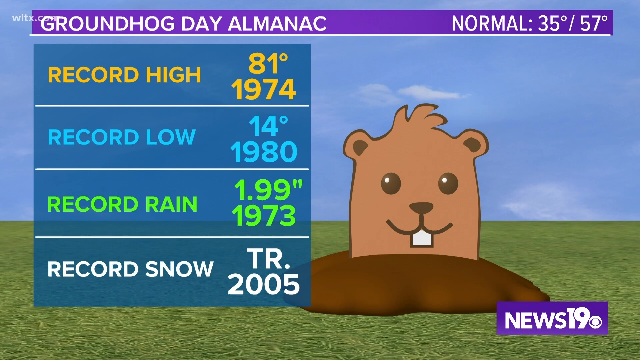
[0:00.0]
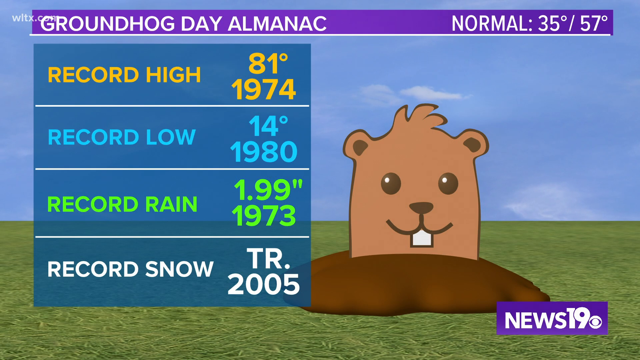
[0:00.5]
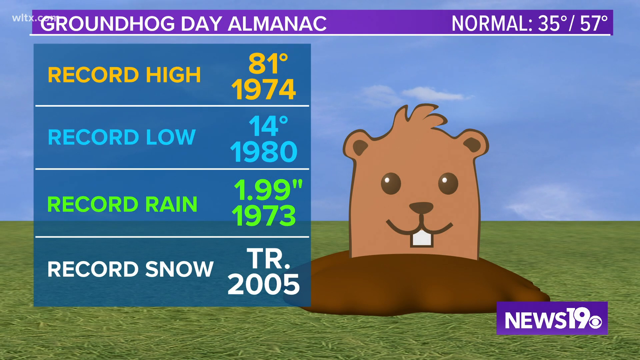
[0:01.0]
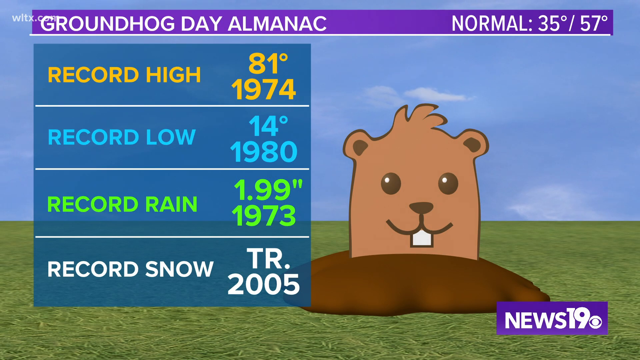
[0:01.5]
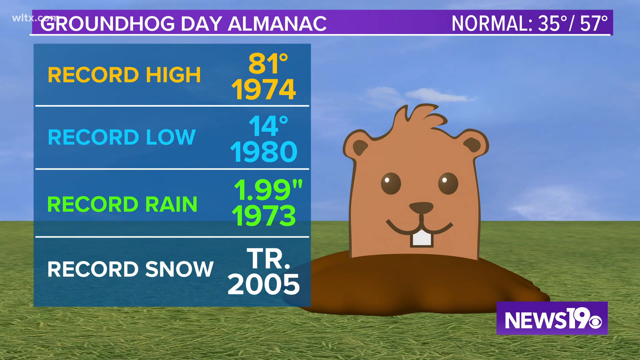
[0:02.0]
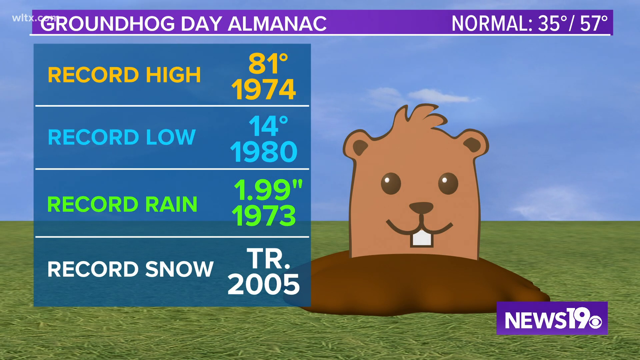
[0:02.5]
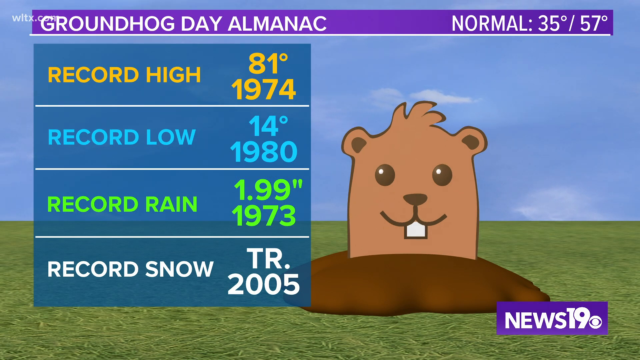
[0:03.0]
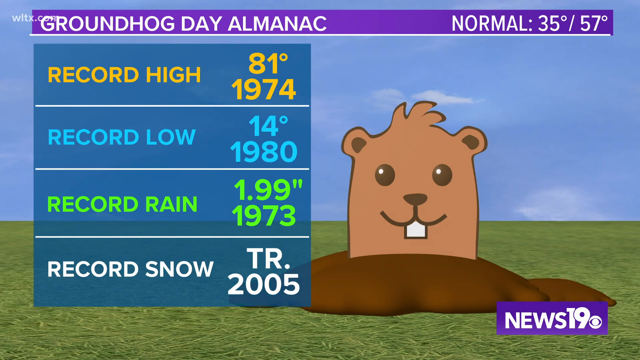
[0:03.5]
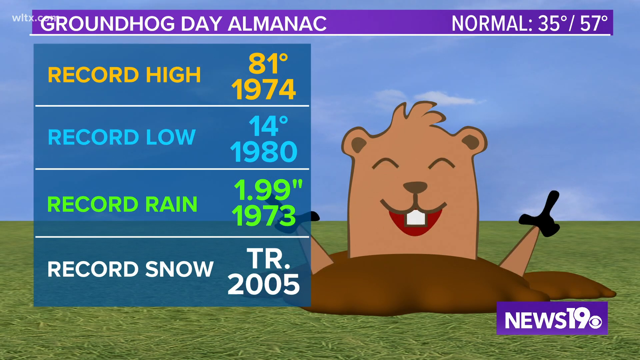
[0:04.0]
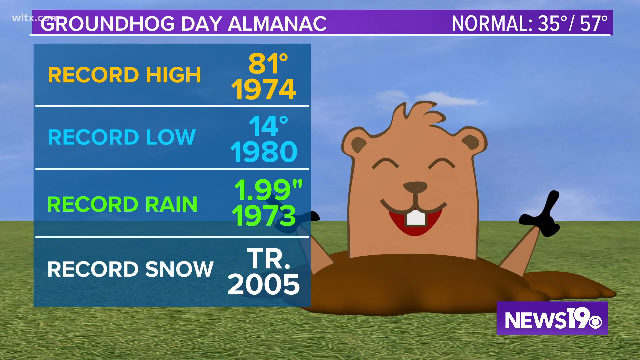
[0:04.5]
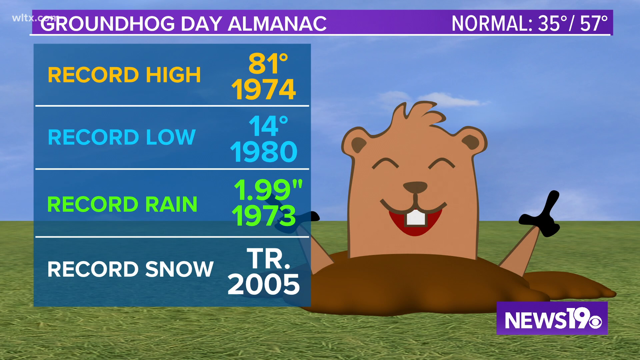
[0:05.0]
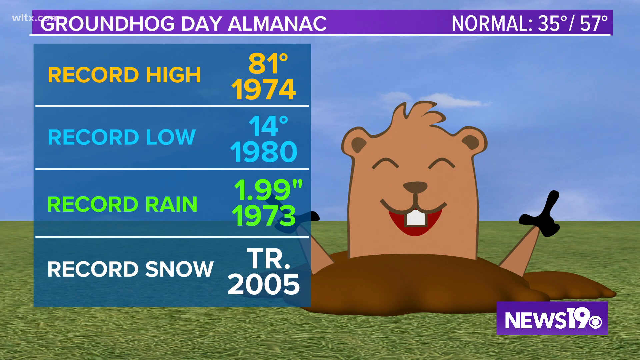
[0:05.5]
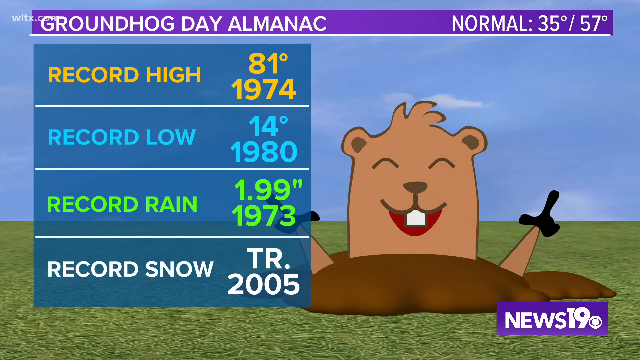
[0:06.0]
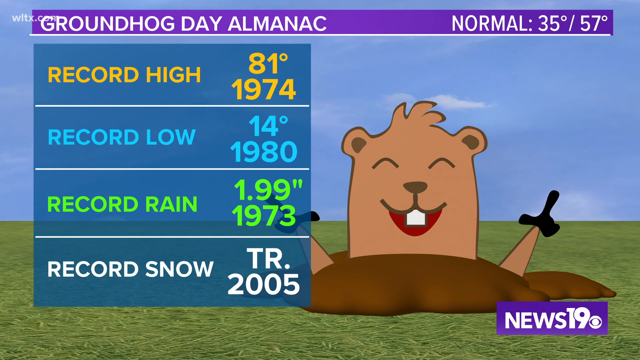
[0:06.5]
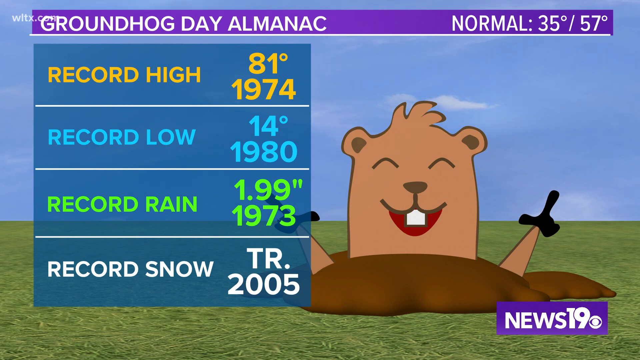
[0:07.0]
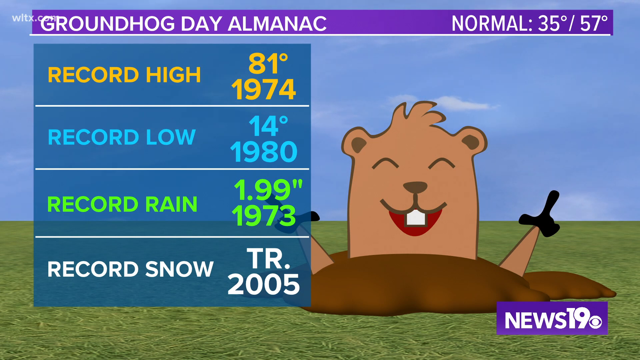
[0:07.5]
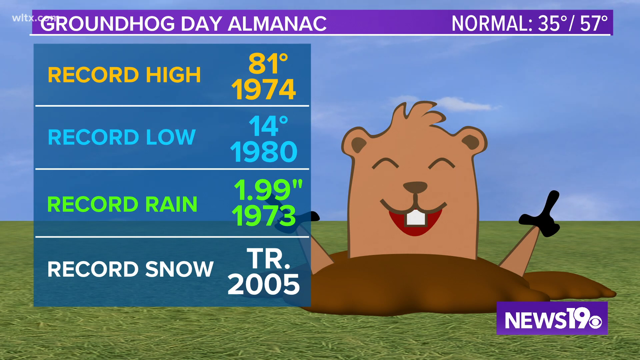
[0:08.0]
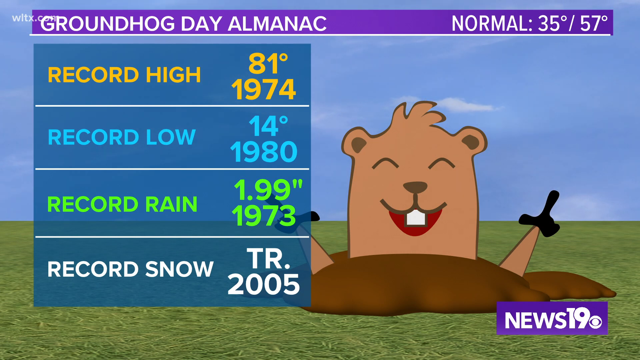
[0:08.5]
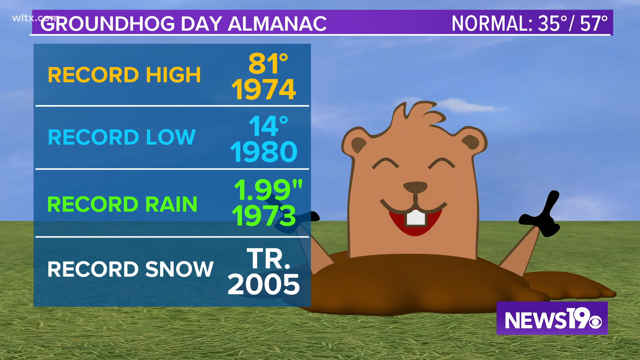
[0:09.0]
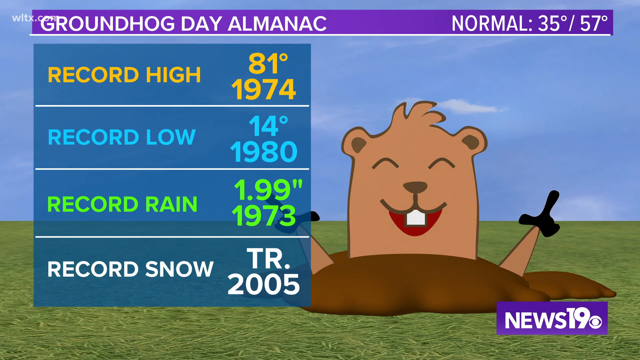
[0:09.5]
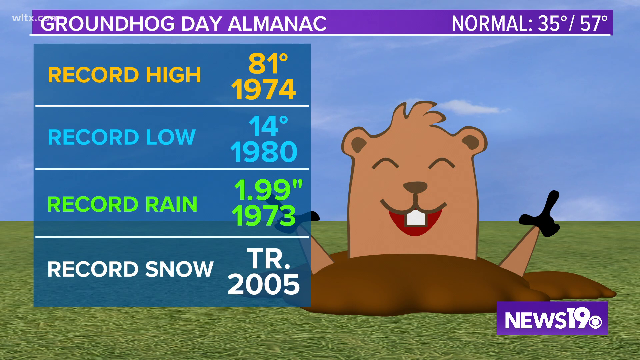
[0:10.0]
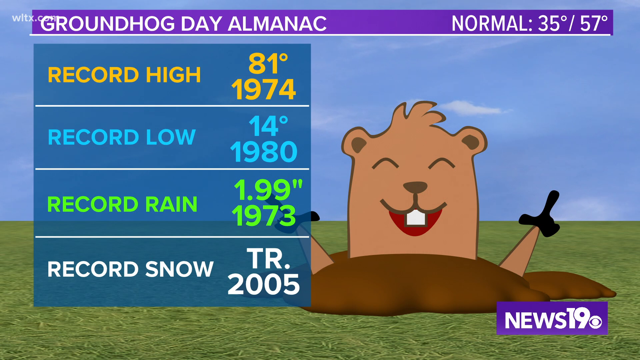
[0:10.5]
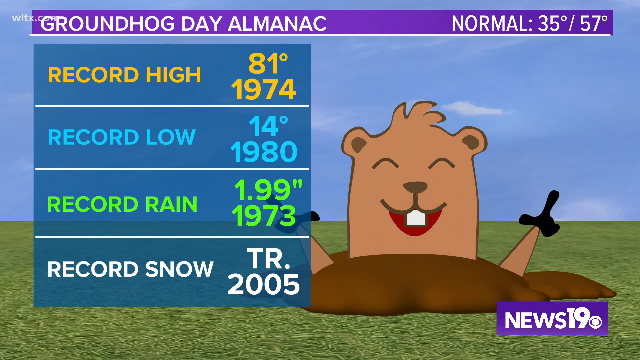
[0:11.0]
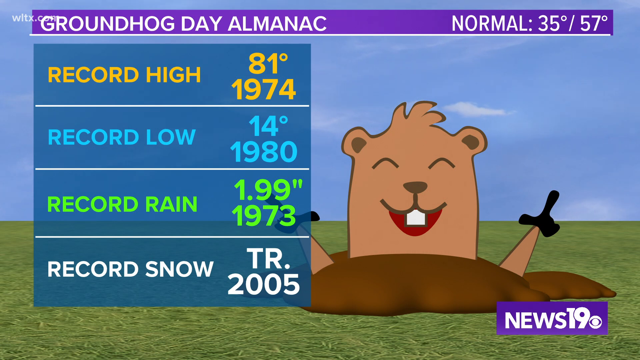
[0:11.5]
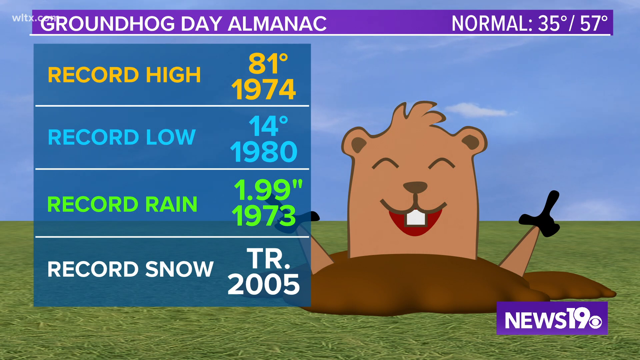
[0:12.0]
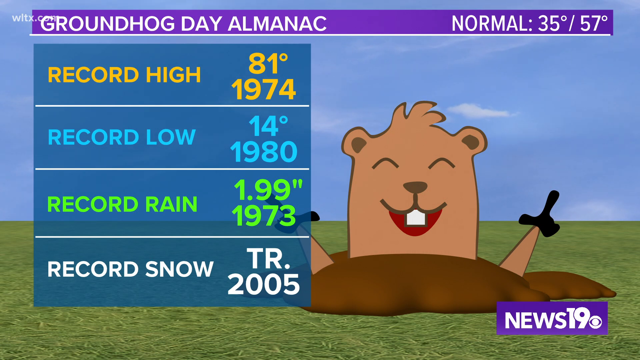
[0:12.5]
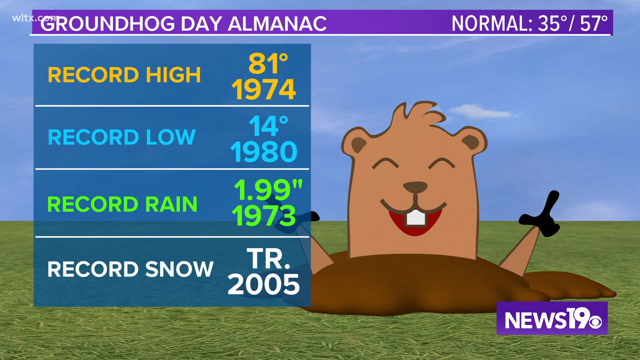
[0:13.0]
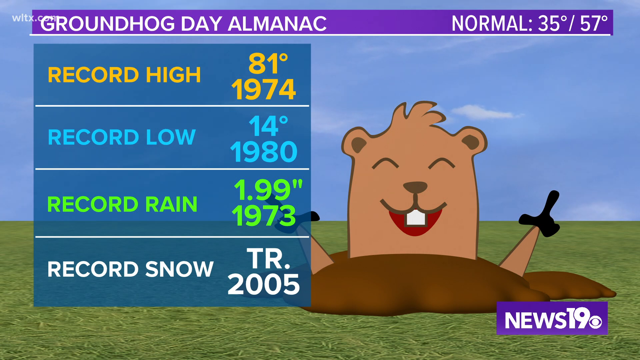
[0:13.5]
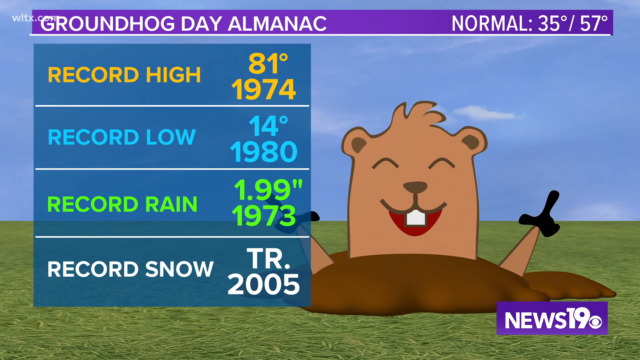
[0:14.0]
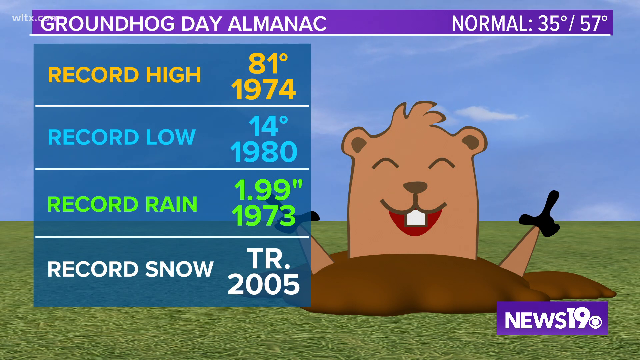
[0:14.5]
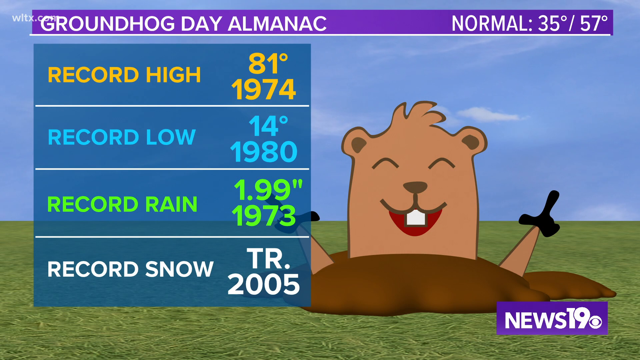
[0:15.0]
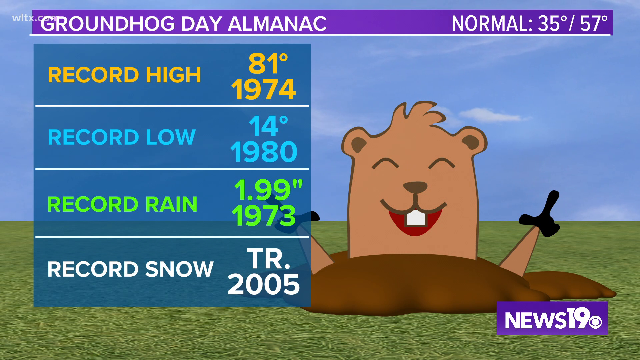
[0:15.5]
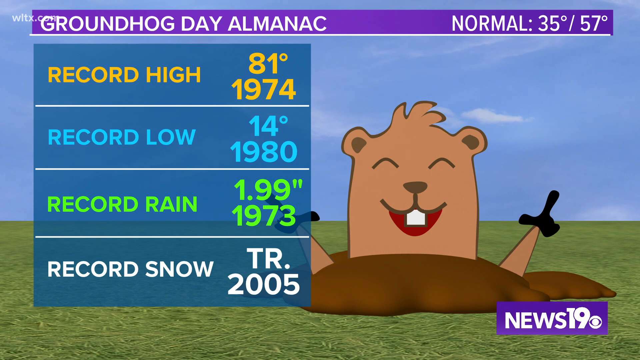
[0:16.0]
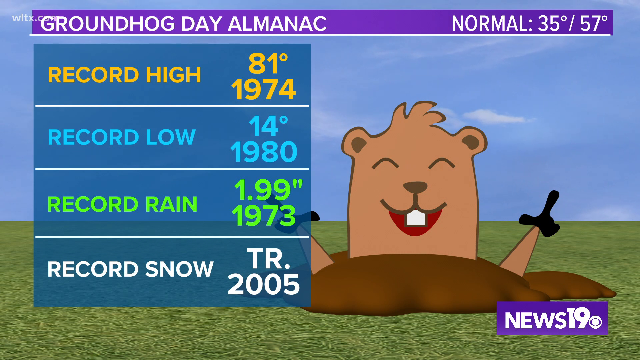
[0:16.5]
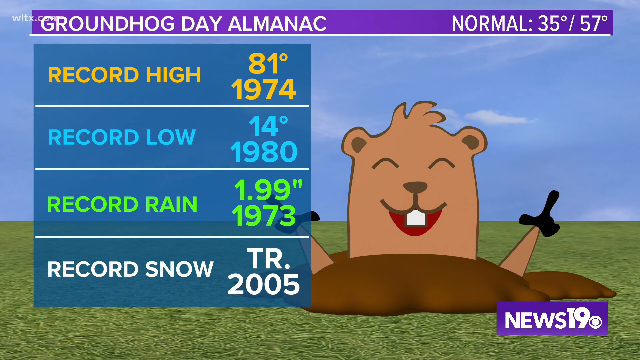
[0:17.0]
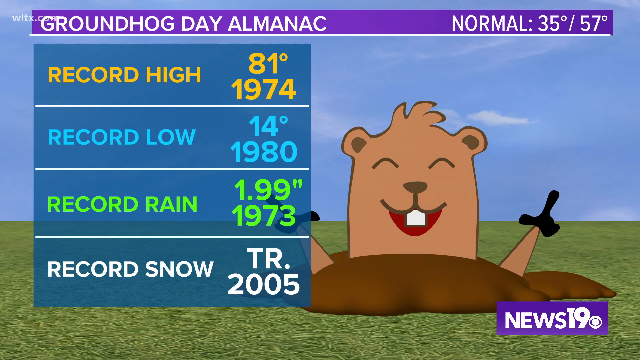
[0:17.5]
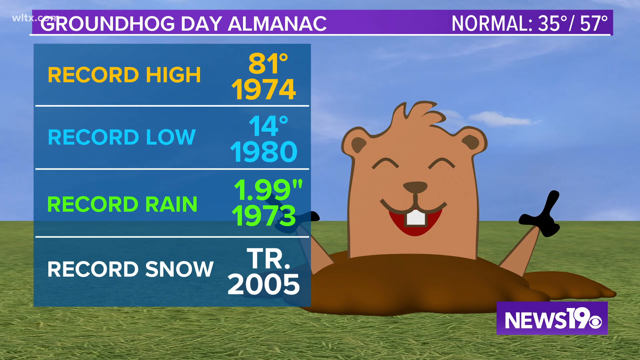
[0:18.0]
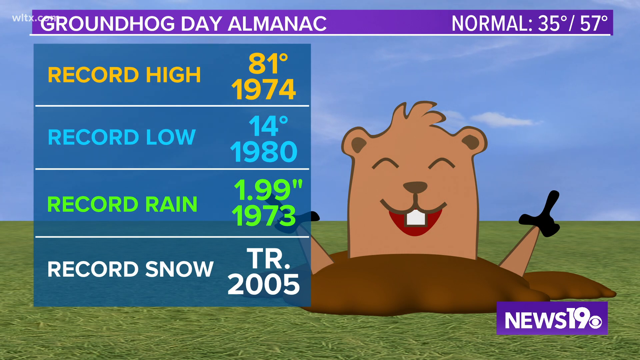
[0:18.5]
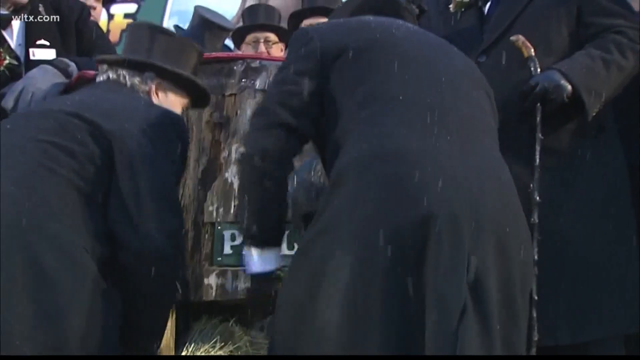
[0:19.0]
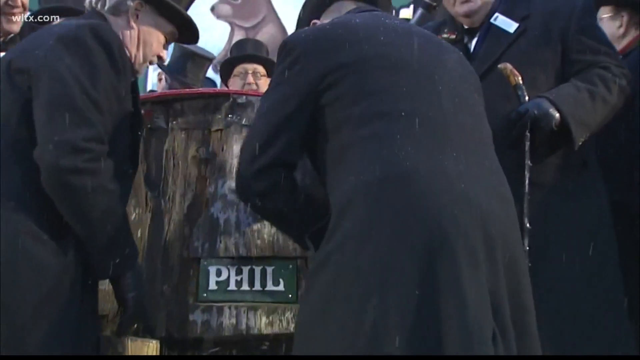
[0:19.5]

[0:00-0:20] The video appears to be from a news channel, News 19, showing a Groundhog Day almanac. The screen reads "normal 35 high 57" and then gives the Groundhog Day records: a record high of 81 degrees in 1974, a record low of 14 degrees in 1980, record rain of 1.99 inches in 1973, and record snow of "tr" in 2005, an abbreviation whose meaning is unclear. An animated groundhog appears, smiling with his hands in the air, kind of sitting there, and stays on the screen for a little while so the almanac information and records can be read. Then a video clip from the movie Groundhog Day begins.